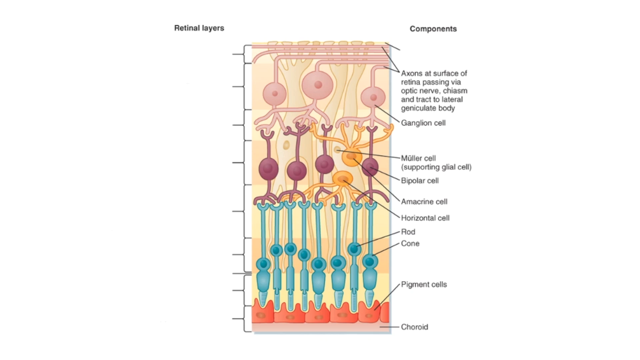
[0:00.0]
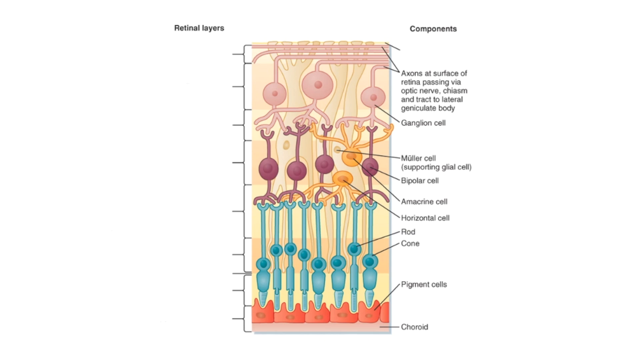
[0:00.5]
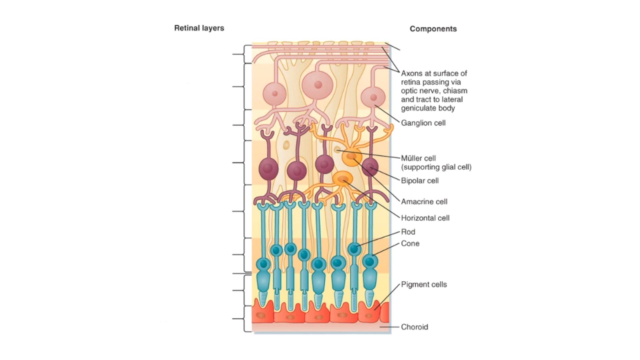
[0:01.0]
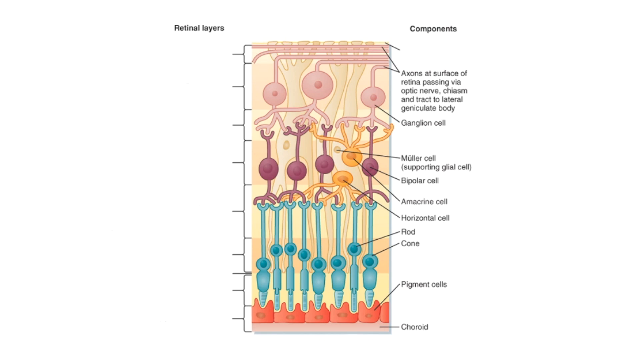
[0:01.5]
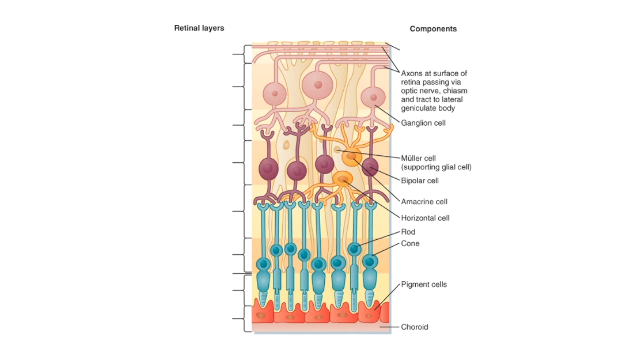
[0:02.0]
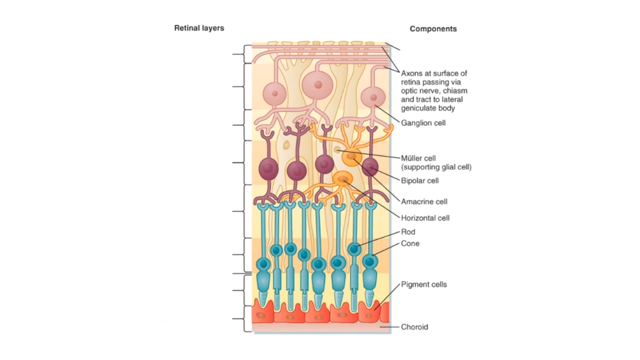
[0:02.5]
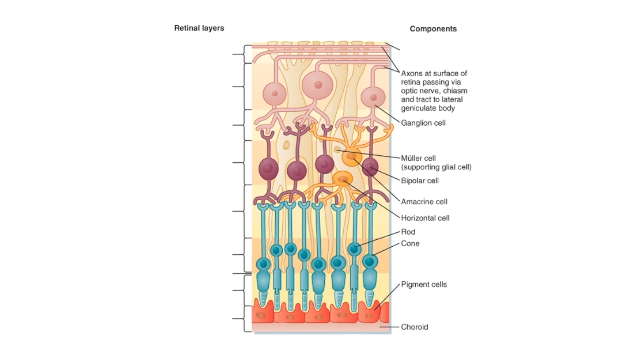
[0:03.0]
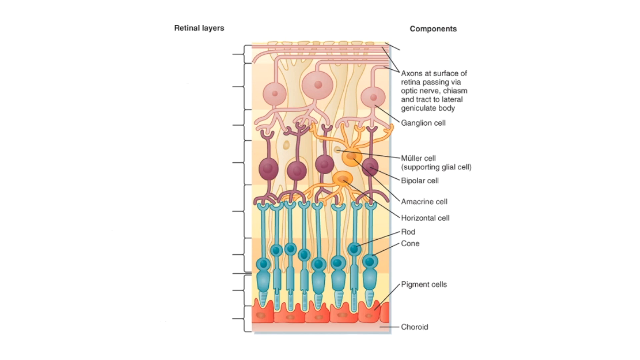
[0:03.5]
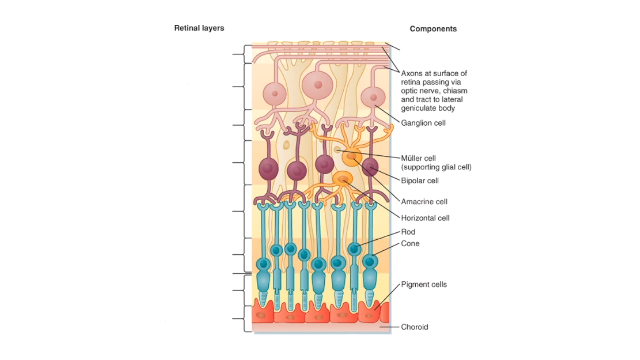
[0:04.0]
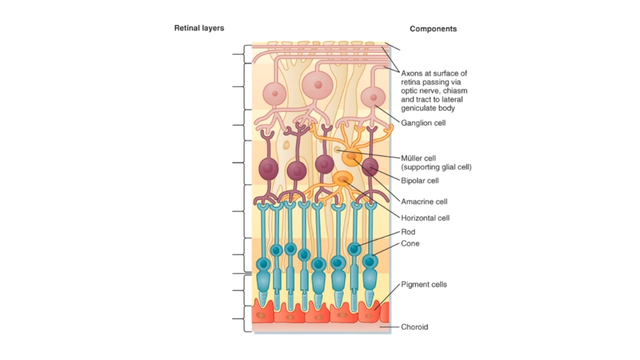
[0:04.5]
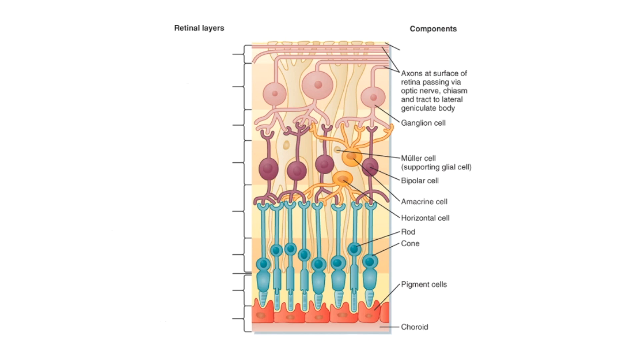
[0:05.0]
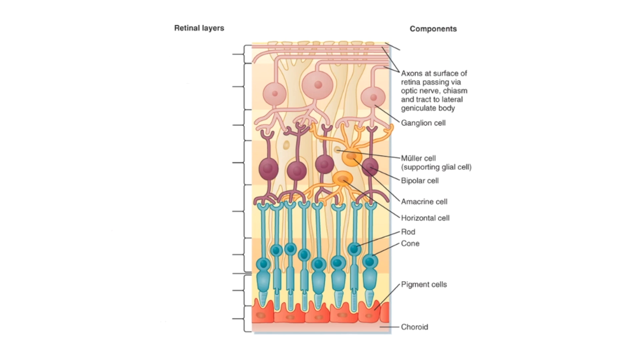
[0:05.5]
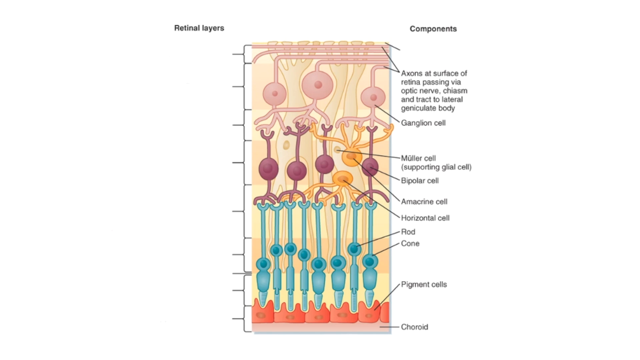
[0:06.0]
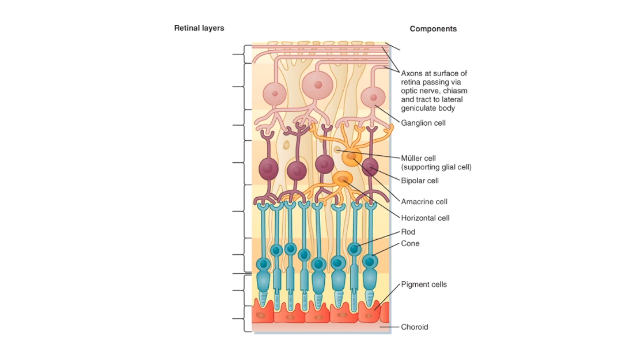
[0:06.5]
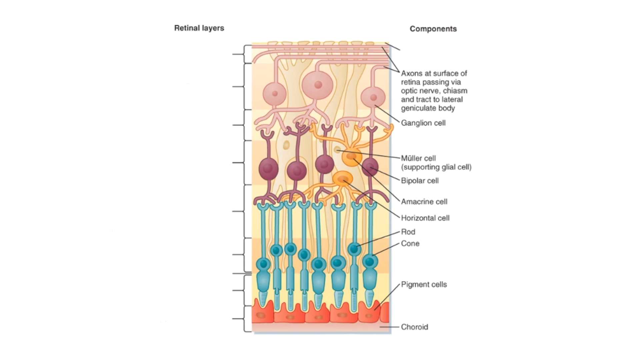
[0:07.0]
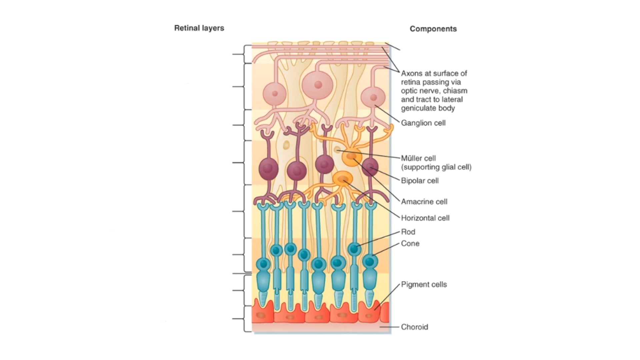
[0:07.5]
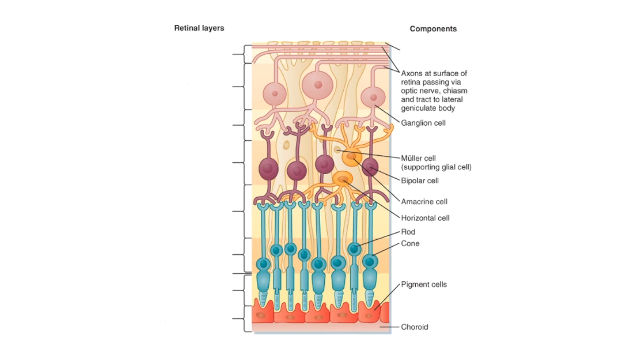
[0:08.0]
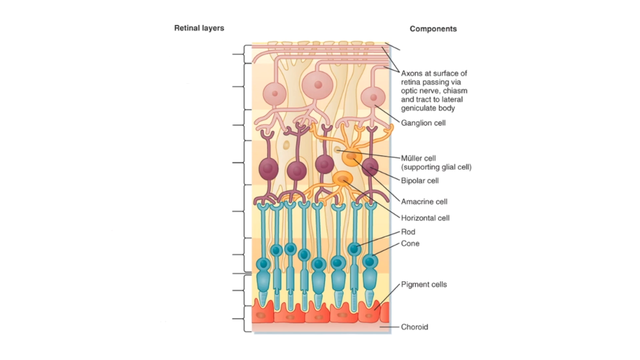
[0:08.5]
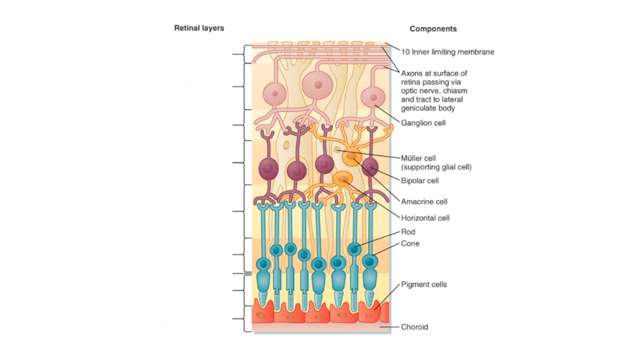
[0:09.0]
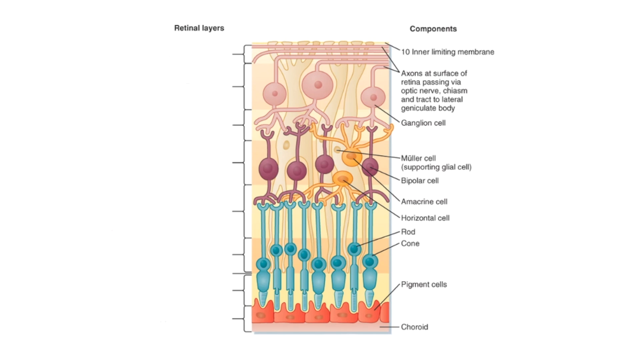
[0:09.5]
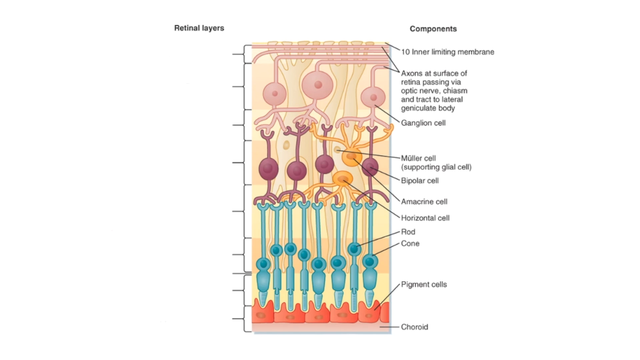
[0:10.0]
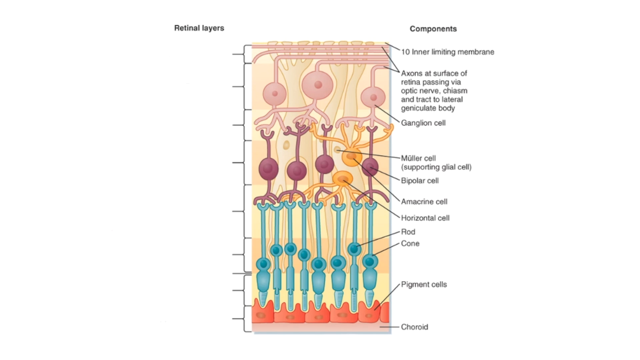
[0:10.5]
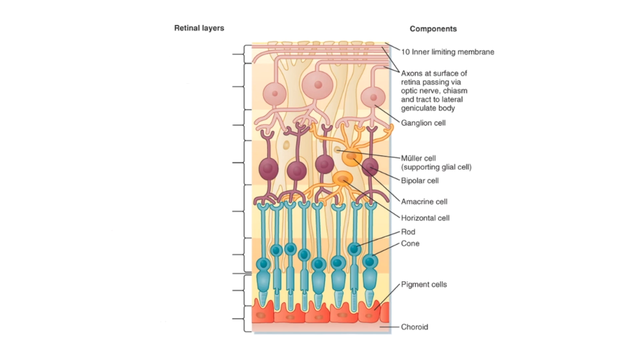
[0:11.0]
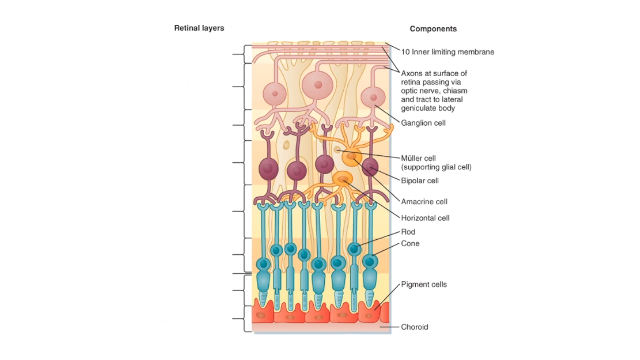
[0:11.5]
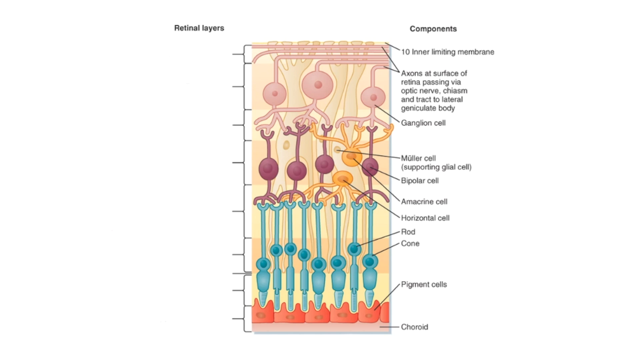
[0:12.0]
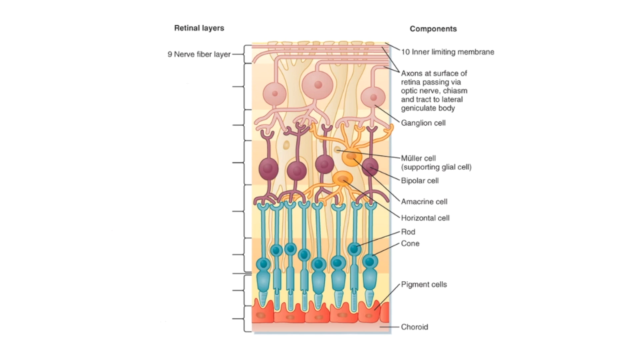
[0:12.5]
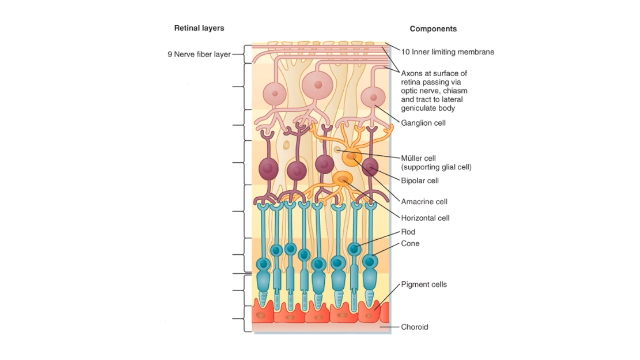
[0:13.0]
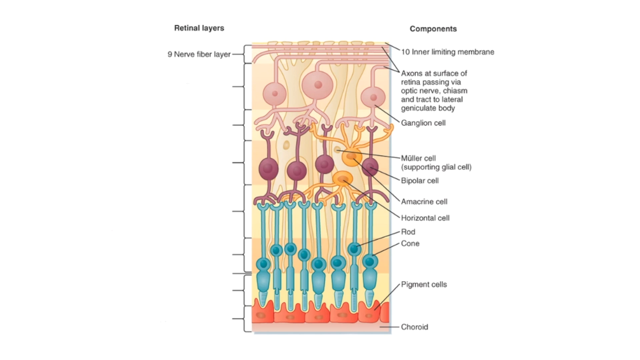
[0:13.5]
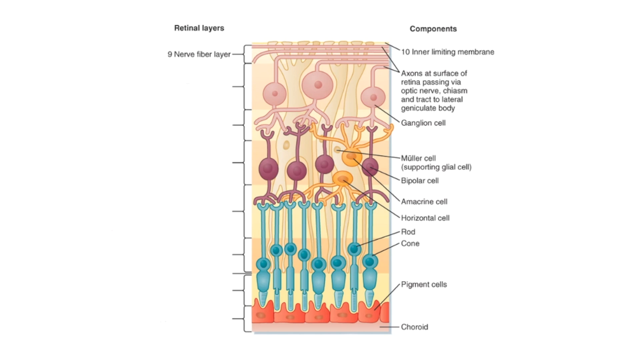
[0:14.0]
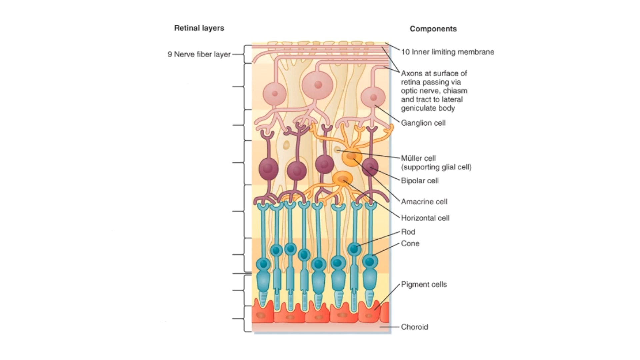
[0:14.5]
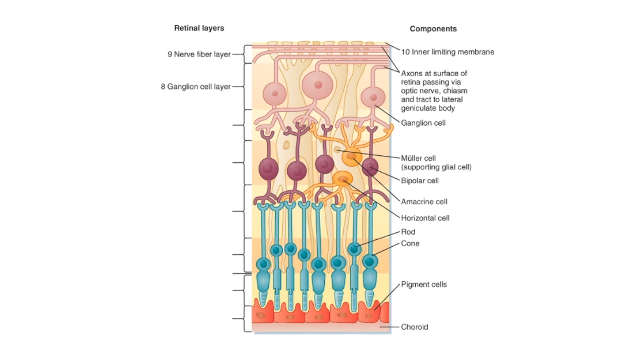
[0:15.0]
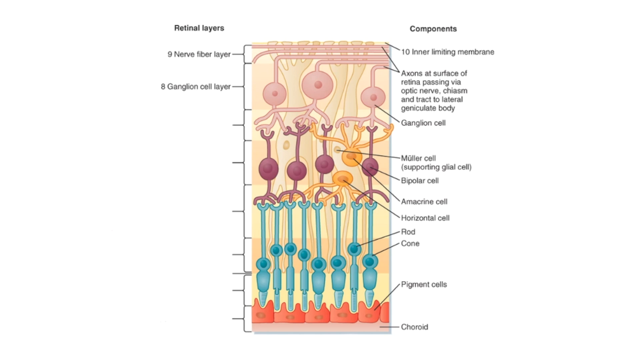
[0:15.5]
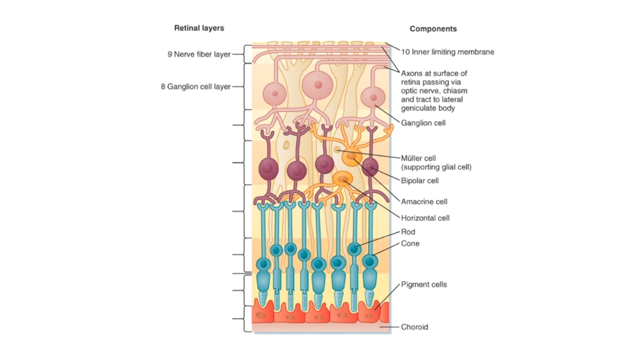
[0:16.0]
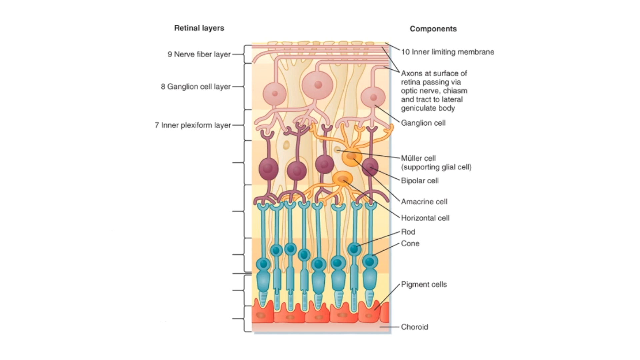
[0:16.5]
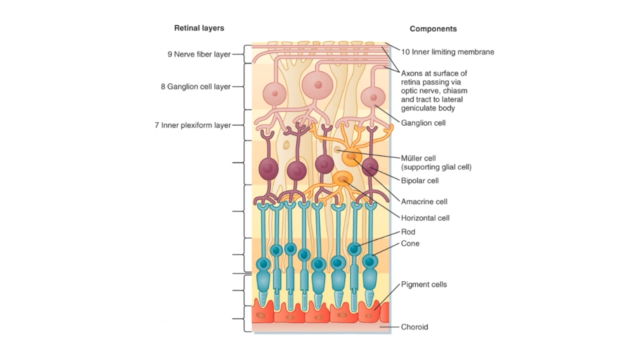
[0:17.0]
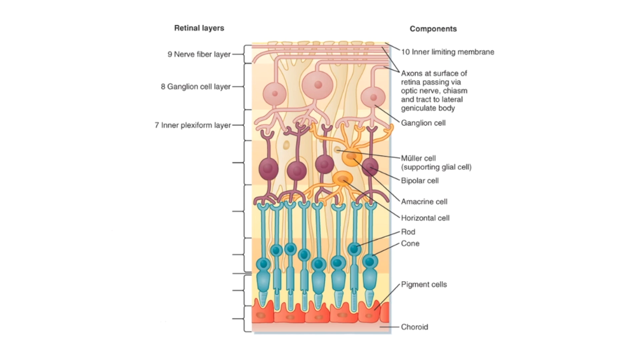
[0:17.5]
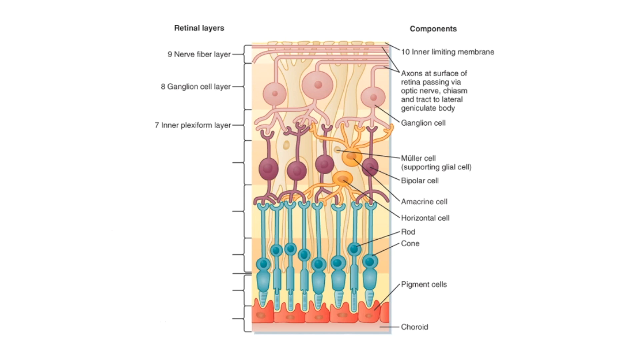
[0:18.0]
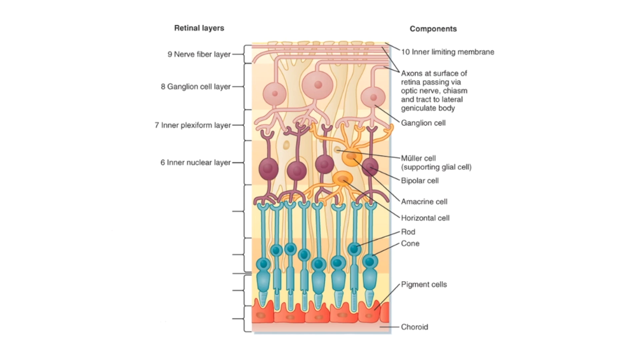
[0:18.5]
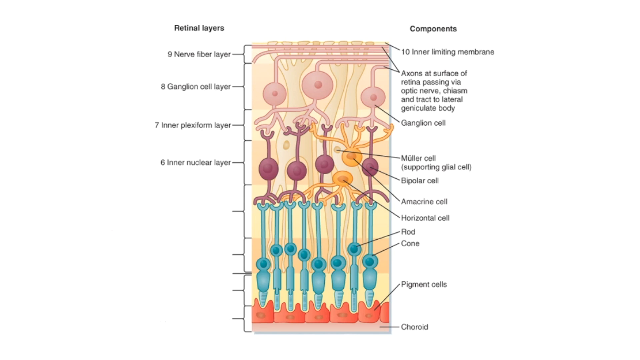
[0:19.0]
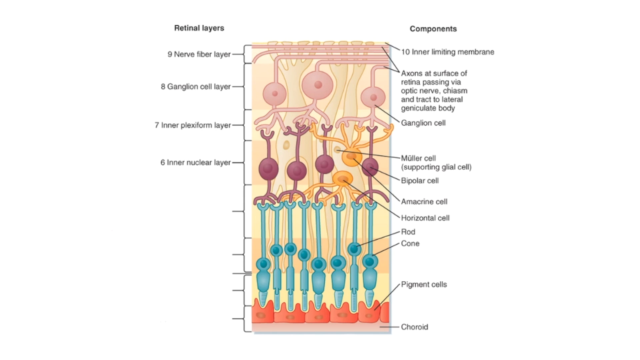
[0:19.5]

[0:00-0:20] What looks like a diagram of many cells, nerves and balls appears, apparently a diagram of a retina or something similar. The top is light pink, below it is purple, below that is teal, and the bottom is orange. The background is pale yellow on the right and left sides, where there are two columns of what looks like black text. On the right side the text reads "components", and below it lines point to different parts of the diagram, with labels reading "axons at surface of retina passing via optic nerve chiasm and tract to lateral geniculate body", "ganglion cell", "molar cell", "supporting glial cell", "bipolar cell", "amacrine cell", "horizontal cell", "rod", "cone", "pigment cells" and "choroid". On the left side the text reads "retinal layers", and there are lines that seem to highlight each layer of the diagram, but they are empty. Then black text reading "10 inner limiting membranes" appears at the top right. On the left side, black text begins appearing from the top down: "9 nerve fiber layer", "8 ganglion cell layer", "7 inner plexiform layer", "6 inner nuclear layer" and finally "5 outer plexiform layer".